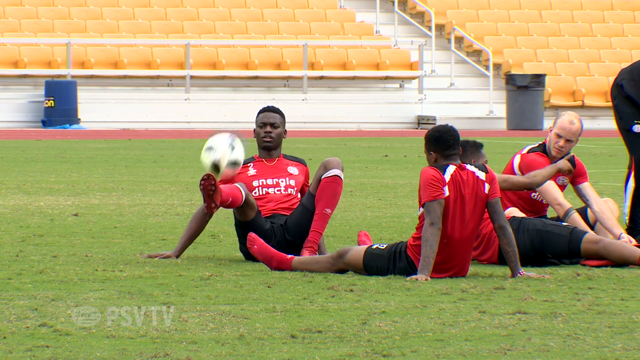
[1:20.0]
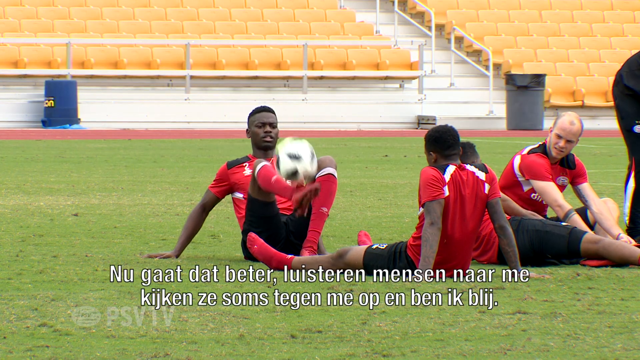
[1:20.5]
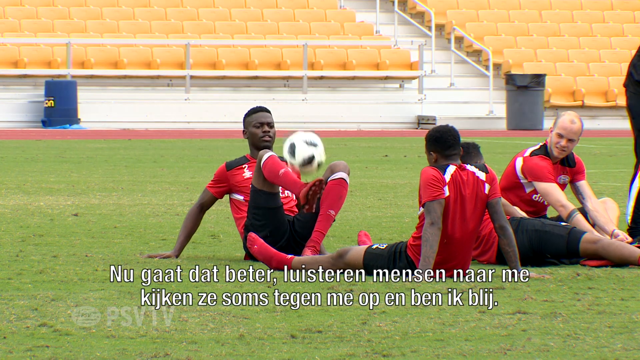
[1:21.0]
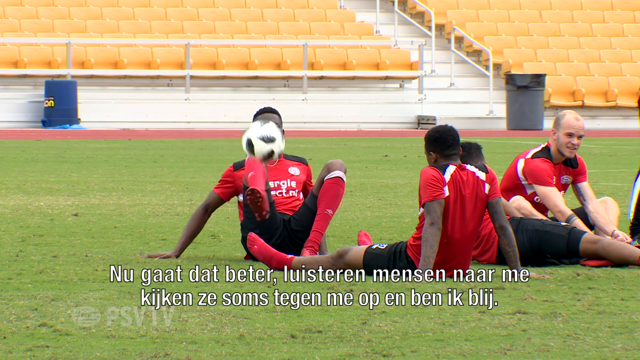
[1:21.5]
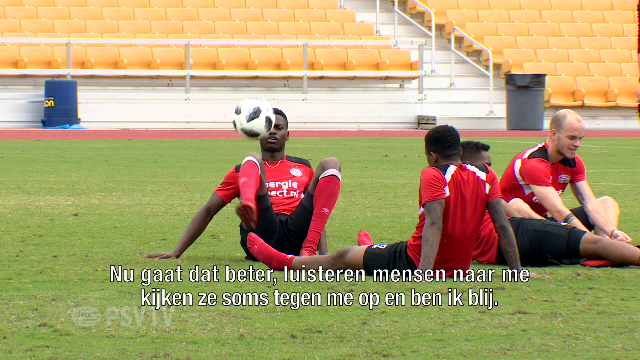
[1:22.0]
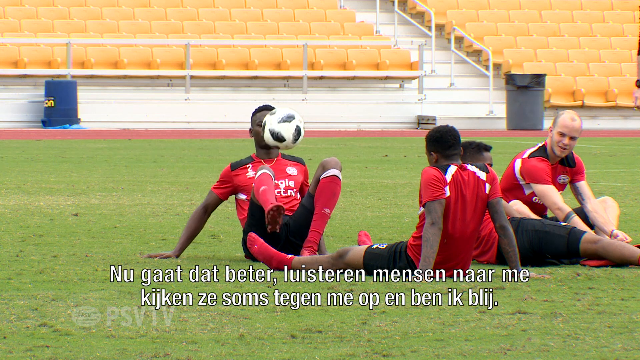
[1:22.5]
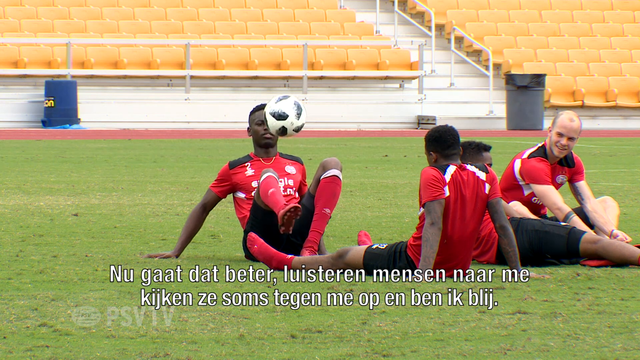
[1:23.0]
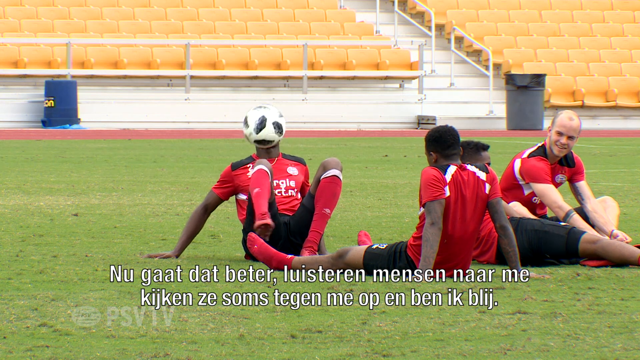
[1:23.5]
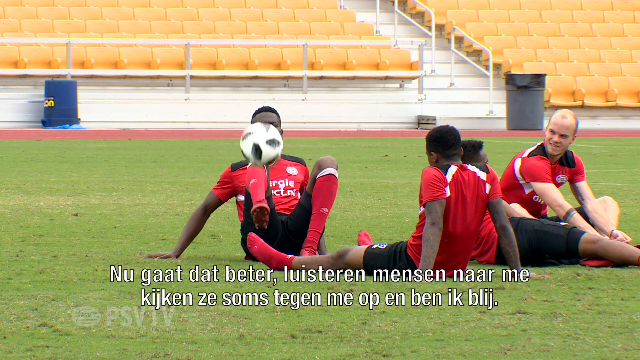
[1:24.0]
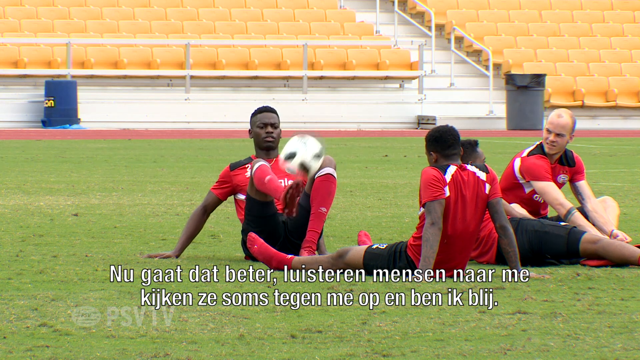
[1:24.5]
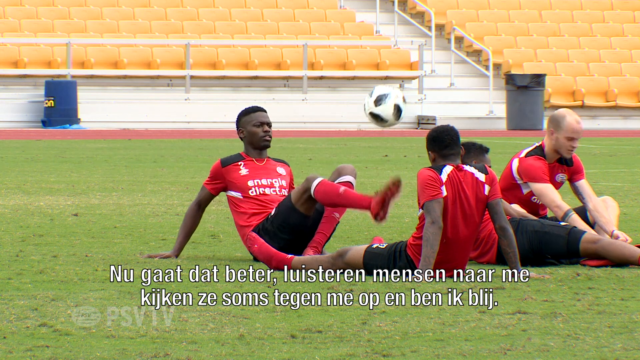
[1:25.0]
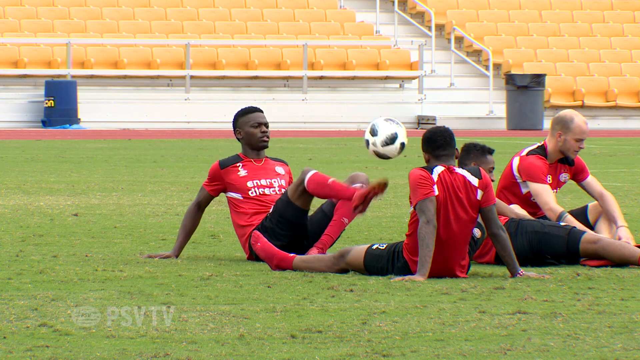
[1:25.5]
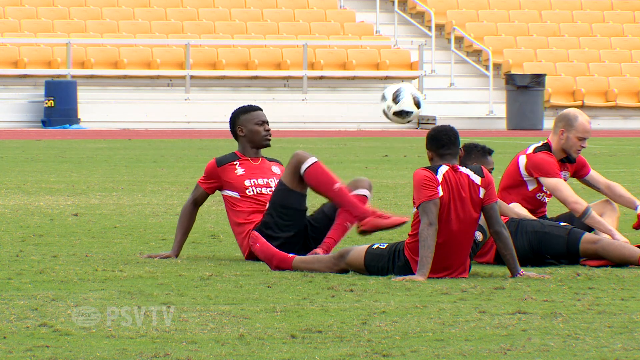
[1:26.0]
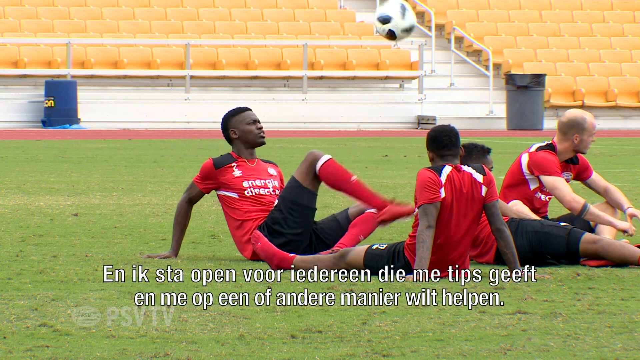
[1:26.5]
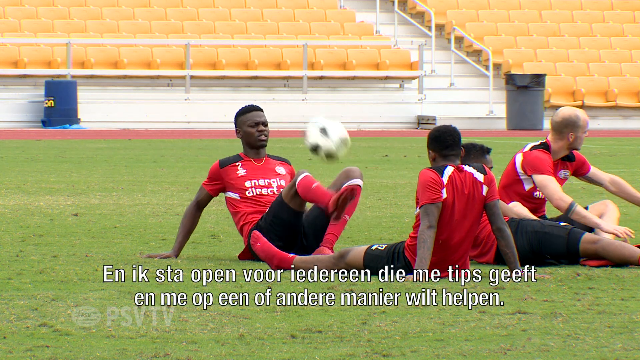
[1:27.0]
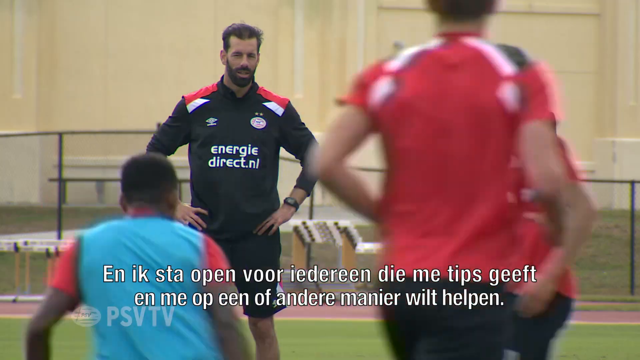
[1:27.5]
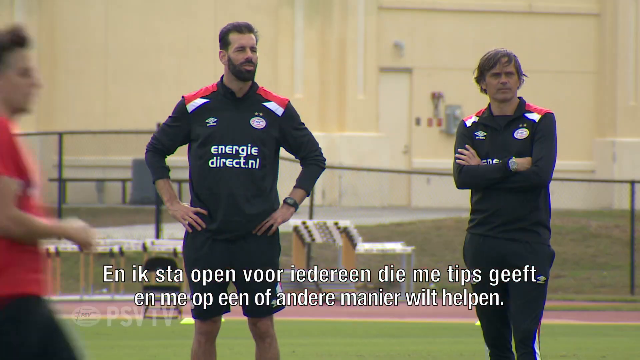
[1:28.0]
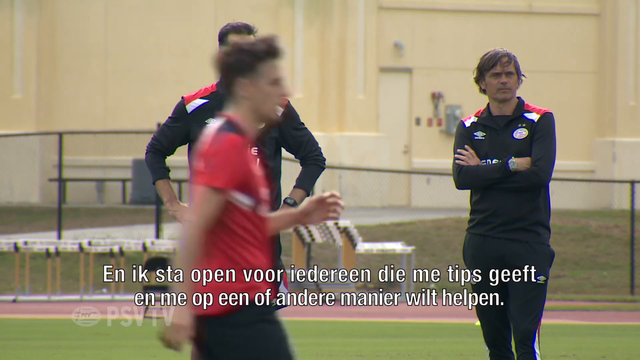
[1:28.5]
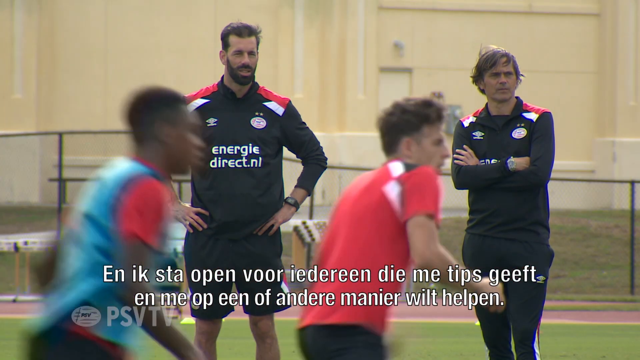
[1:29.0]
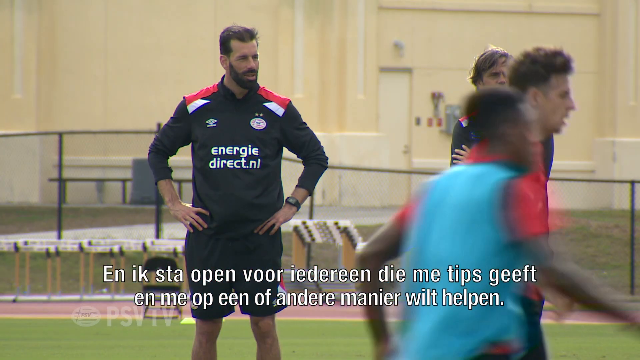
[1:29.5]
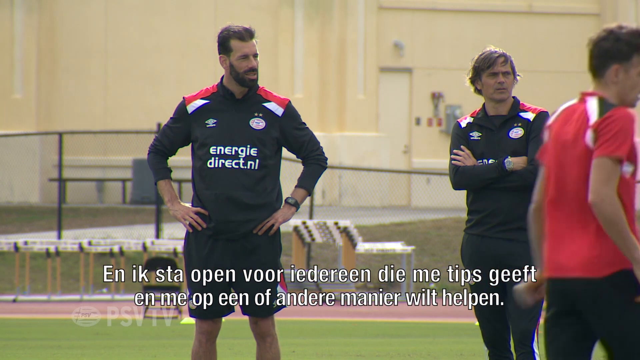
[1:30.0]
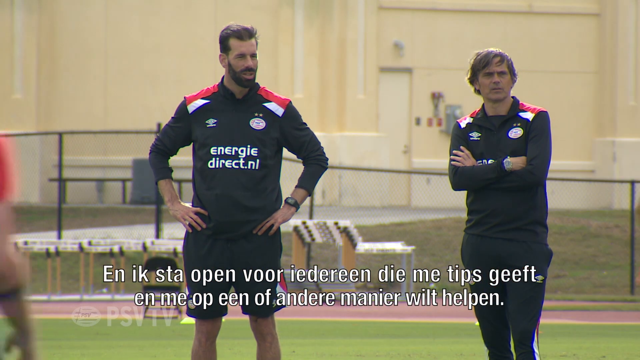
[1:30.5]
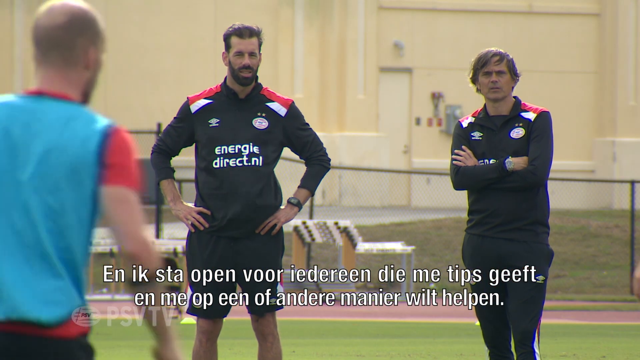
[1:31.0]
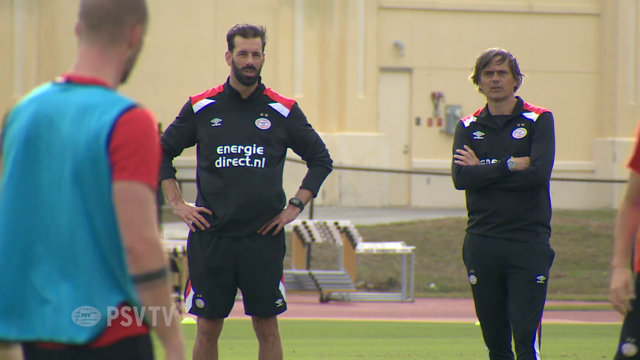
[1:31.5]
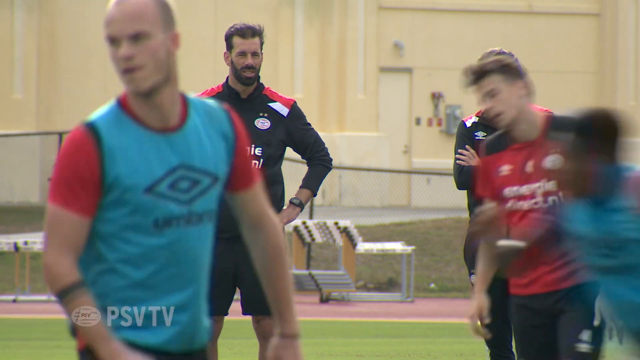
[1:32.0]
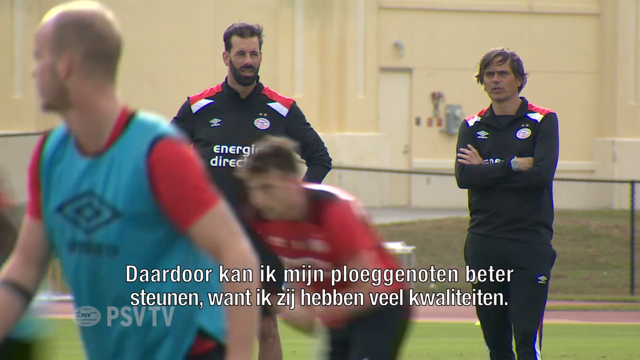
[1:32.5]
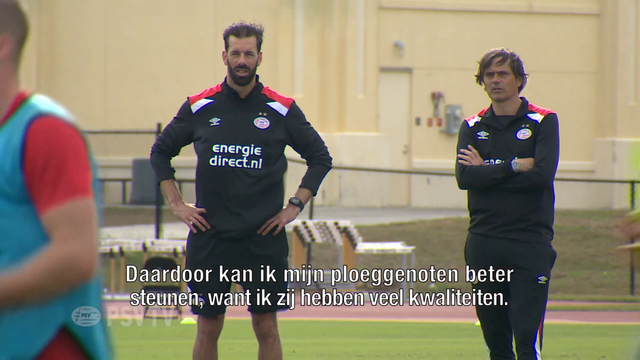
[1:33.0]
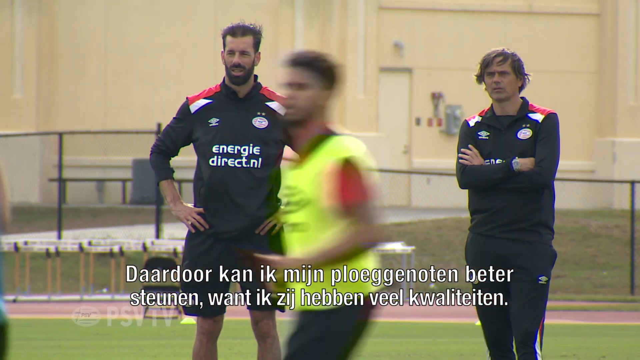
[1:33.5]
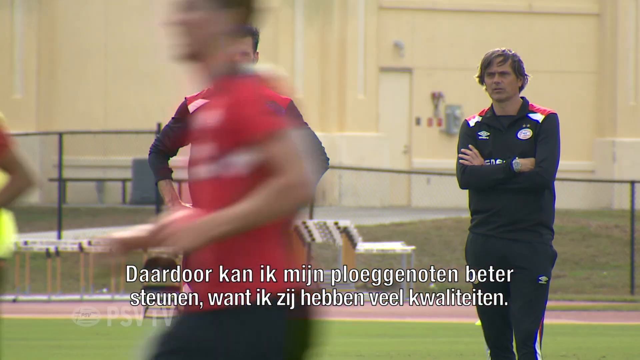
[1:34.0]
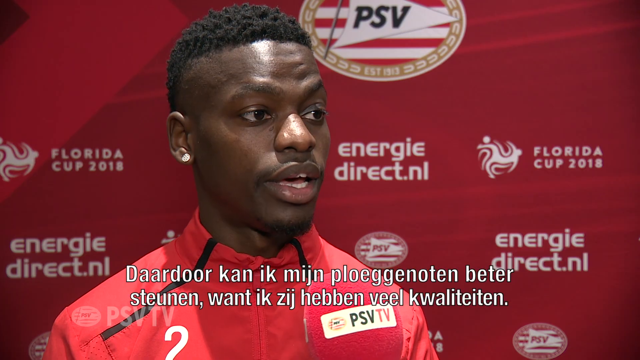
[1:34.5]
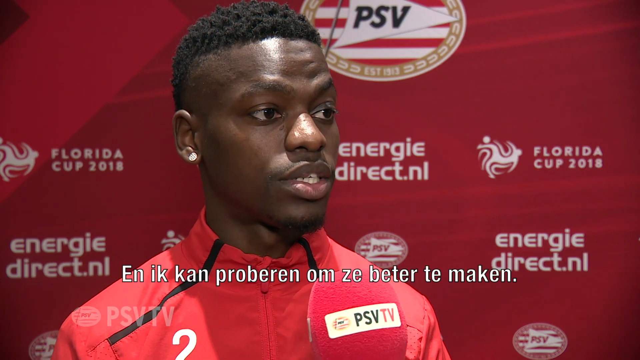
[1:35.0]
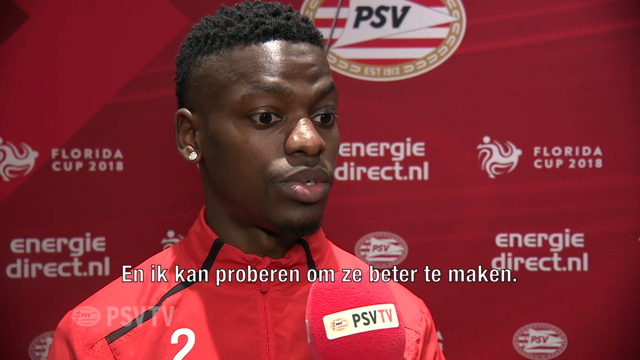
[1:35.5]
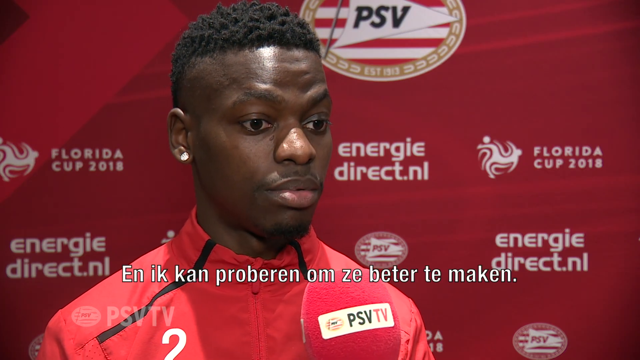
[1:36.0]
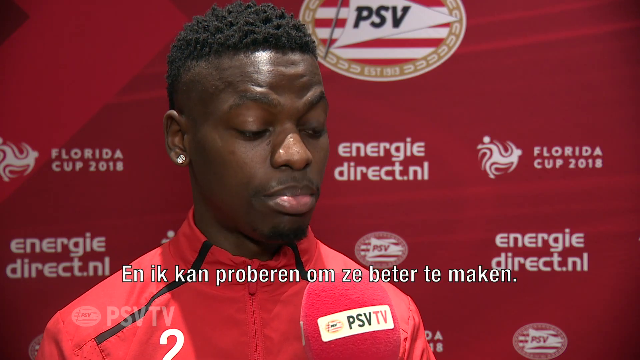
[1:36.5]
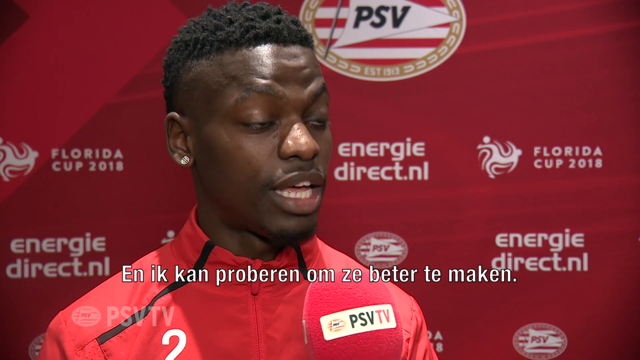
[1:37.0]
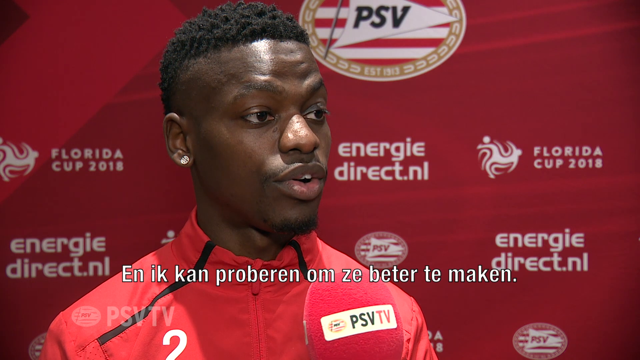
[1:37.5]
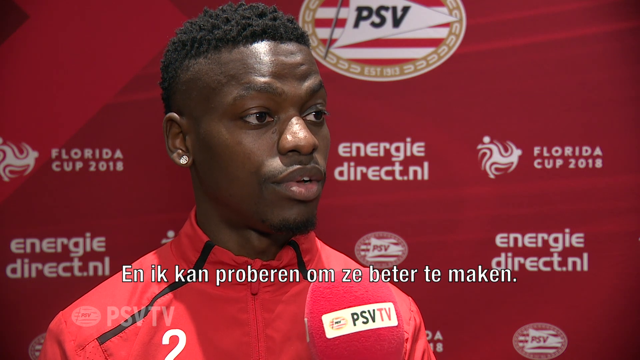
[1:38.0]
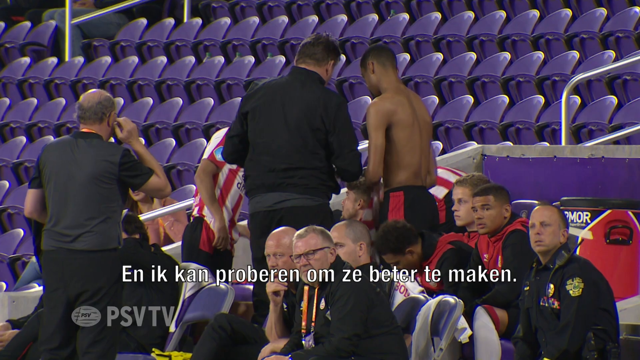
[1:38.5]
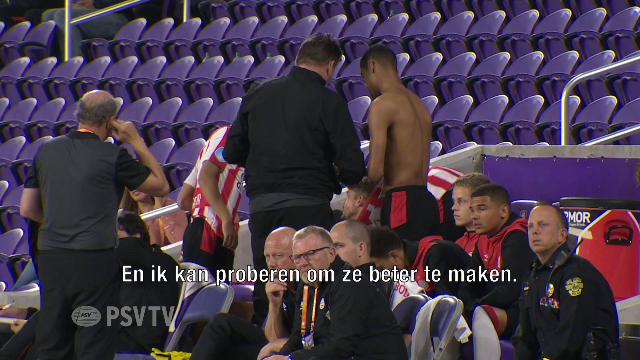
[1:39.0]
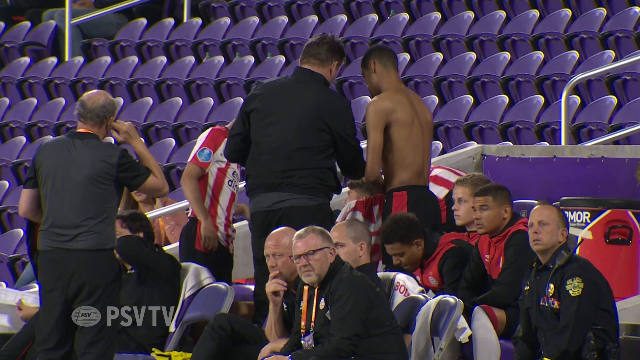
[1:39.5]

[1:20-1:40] Soccer players sit in a grassy field, wearing red jerseys with black at the shoulders, white print on the front, and black shorts. Behind them are metal bleachers with orange seats rising into the seating area. The men are taking a break on the field, and one of them kicks a soccer ball up and down with his foot. Two coaches stand off in the back, their jerseys reading "EnergyDirect.nl"; they wear black shirts with a little red at the shoulder and white print on the front. The video cuts to the man being interviewed again, showing more of his interview. The players' shoes are cleats.